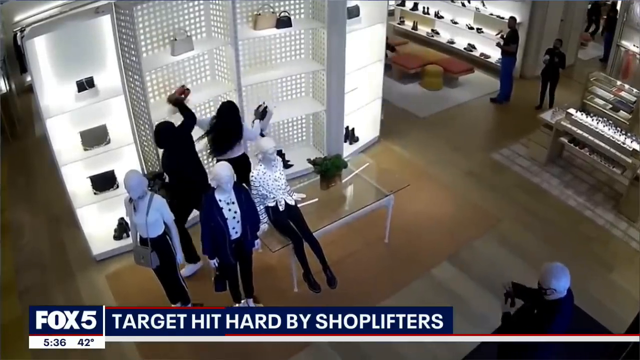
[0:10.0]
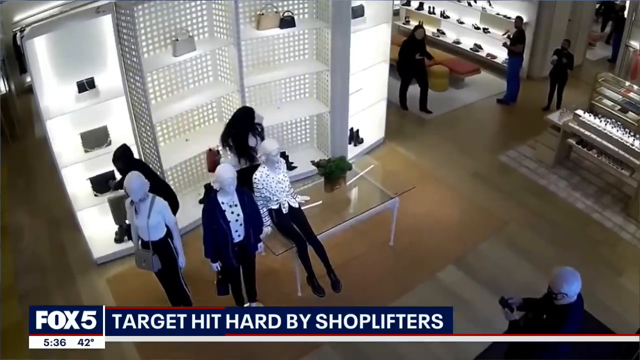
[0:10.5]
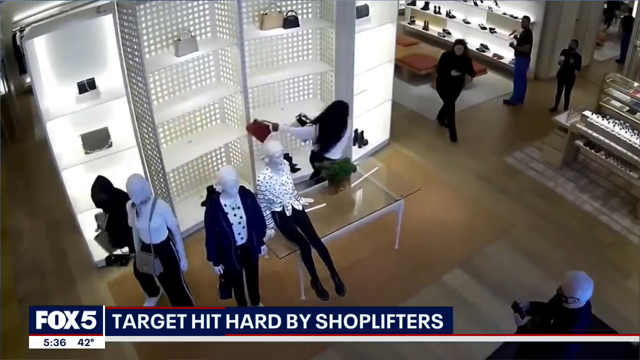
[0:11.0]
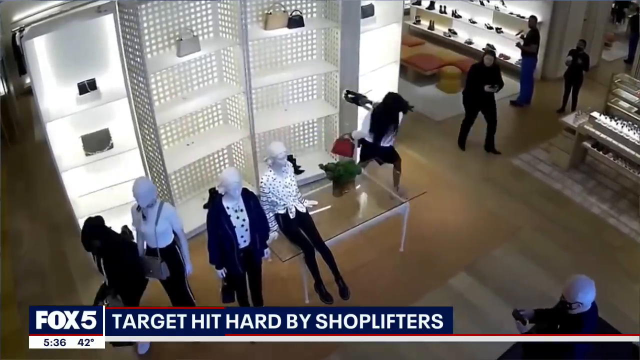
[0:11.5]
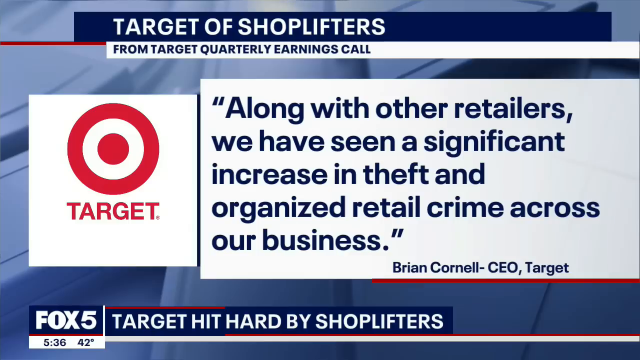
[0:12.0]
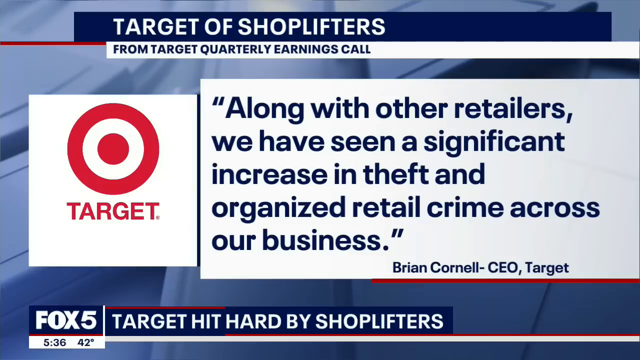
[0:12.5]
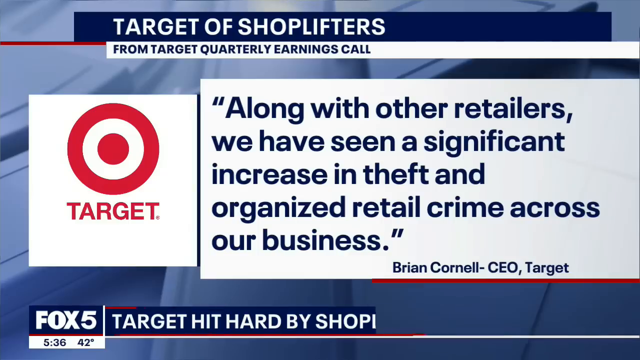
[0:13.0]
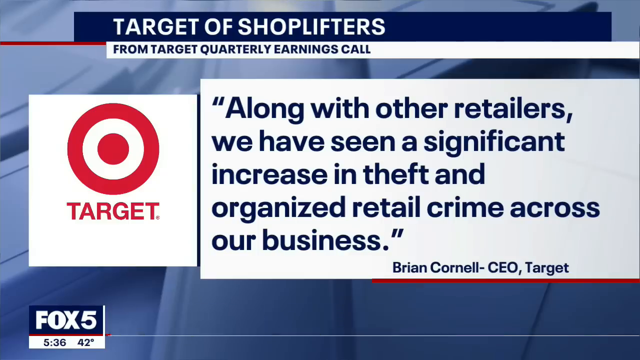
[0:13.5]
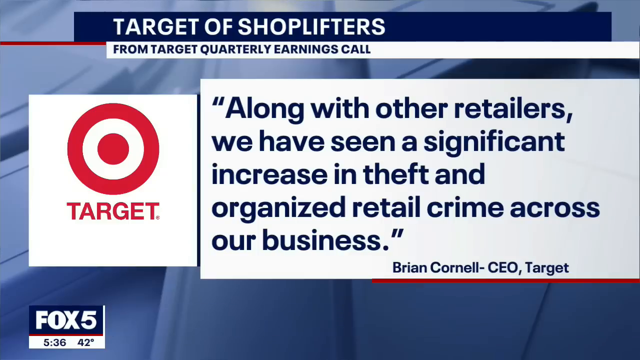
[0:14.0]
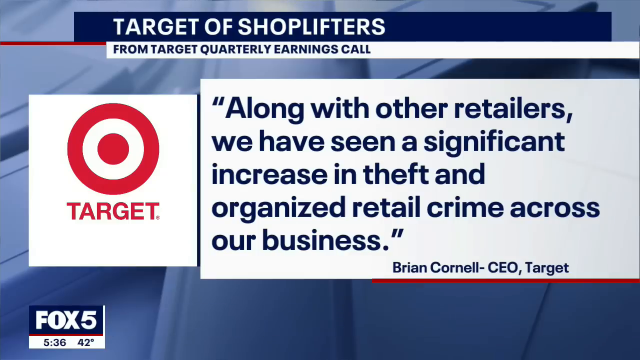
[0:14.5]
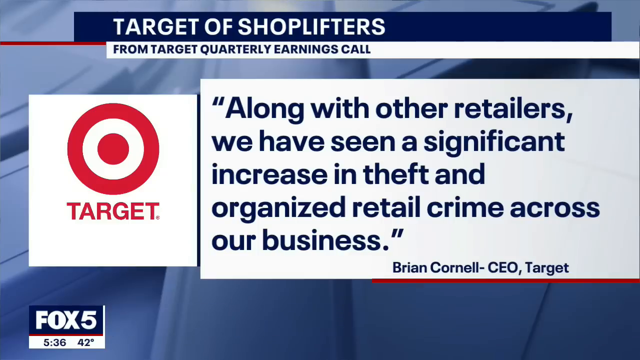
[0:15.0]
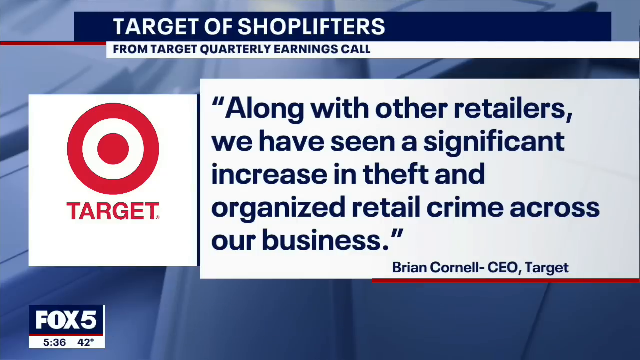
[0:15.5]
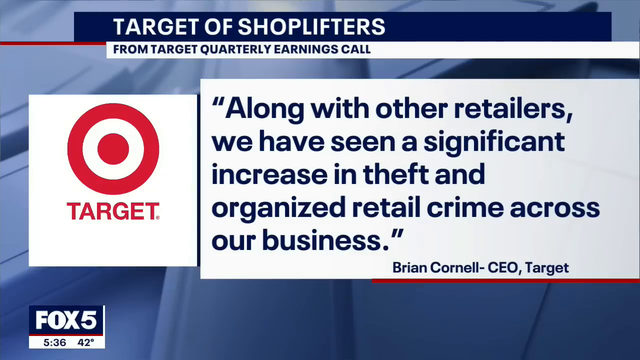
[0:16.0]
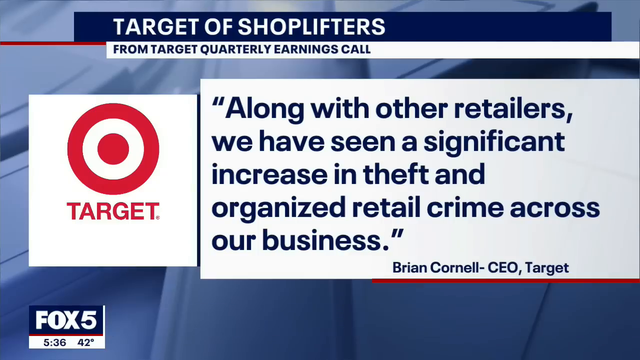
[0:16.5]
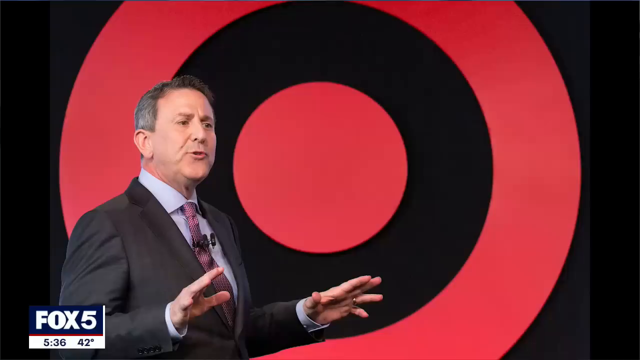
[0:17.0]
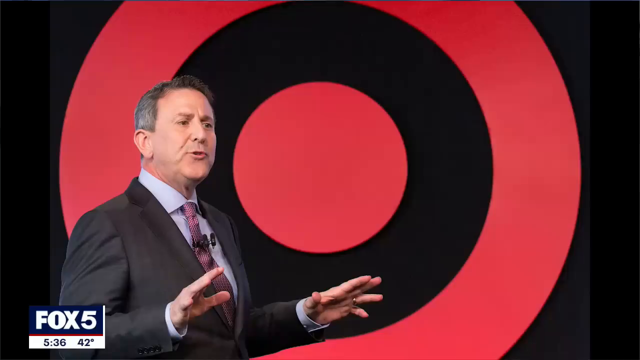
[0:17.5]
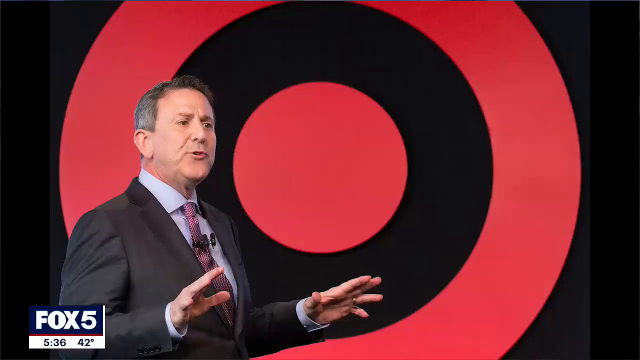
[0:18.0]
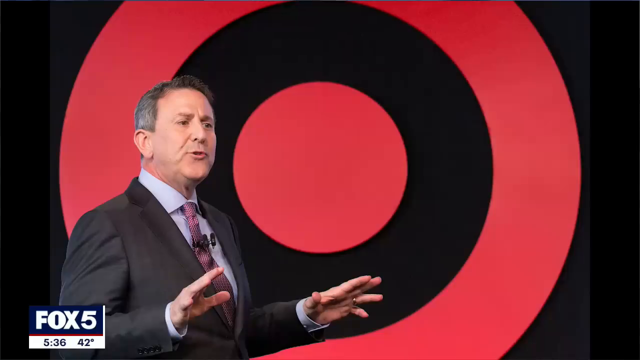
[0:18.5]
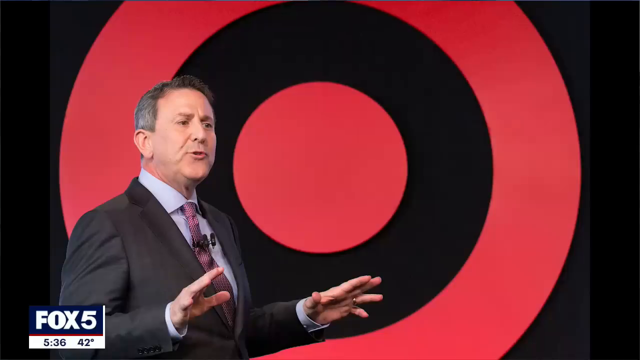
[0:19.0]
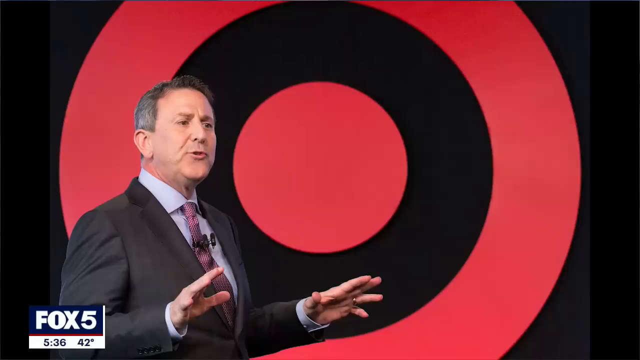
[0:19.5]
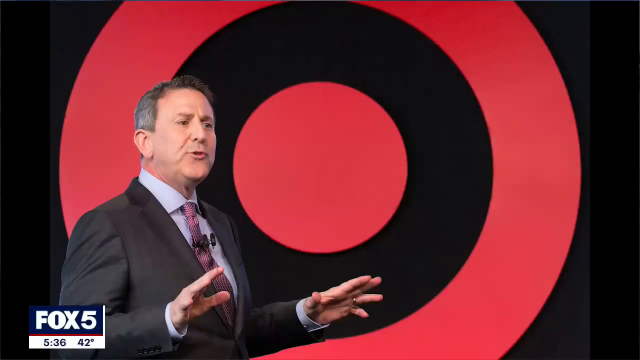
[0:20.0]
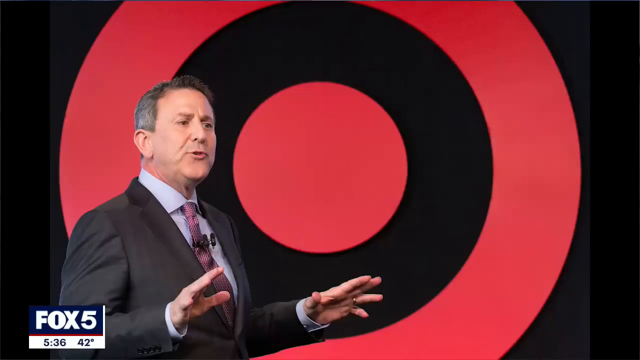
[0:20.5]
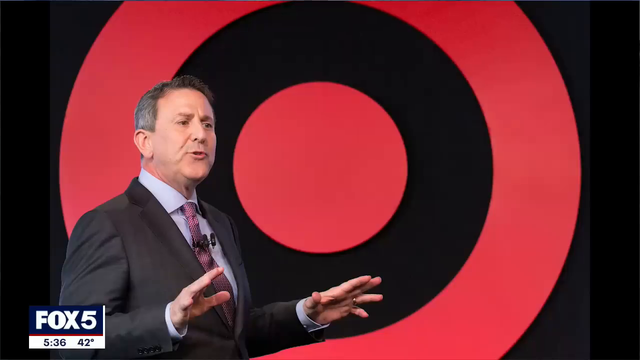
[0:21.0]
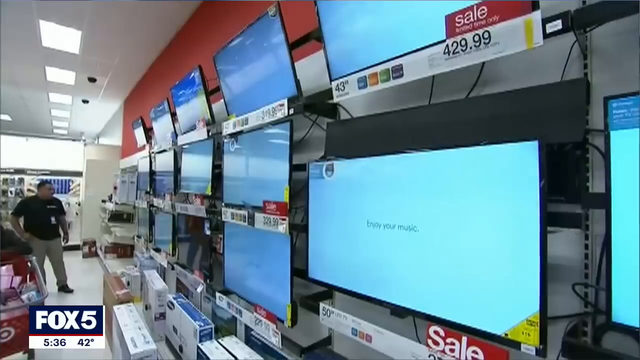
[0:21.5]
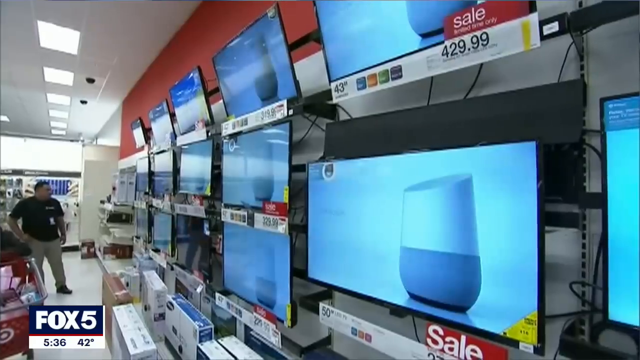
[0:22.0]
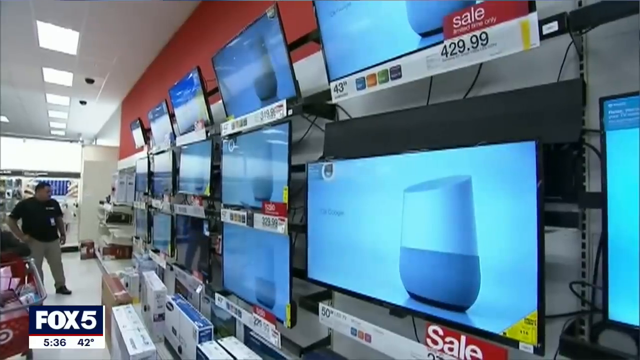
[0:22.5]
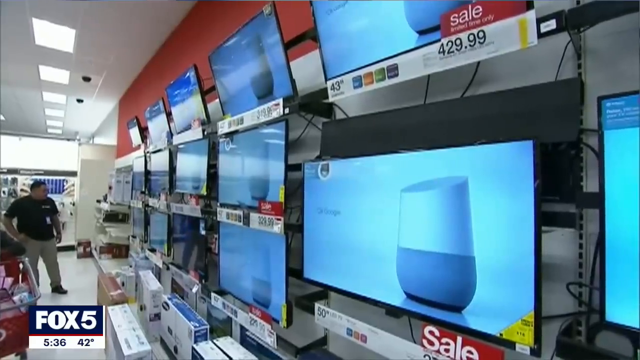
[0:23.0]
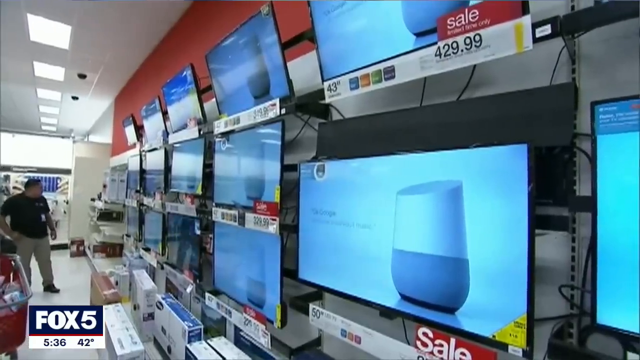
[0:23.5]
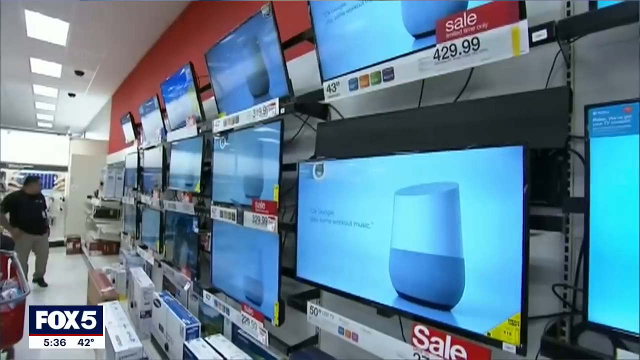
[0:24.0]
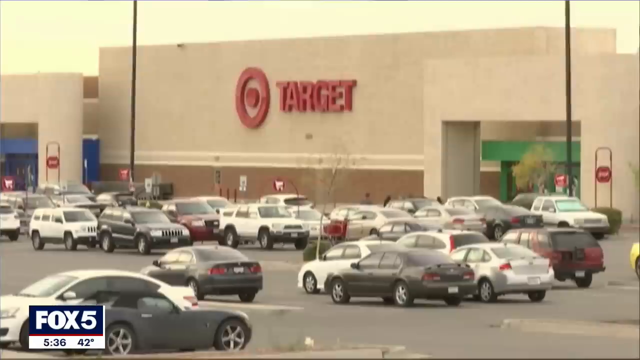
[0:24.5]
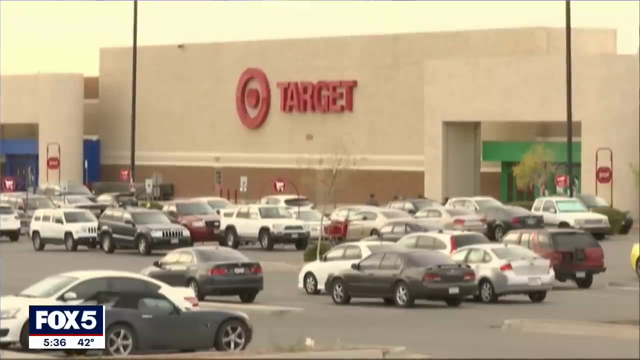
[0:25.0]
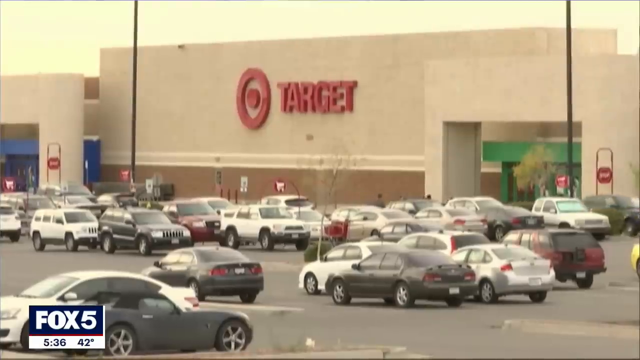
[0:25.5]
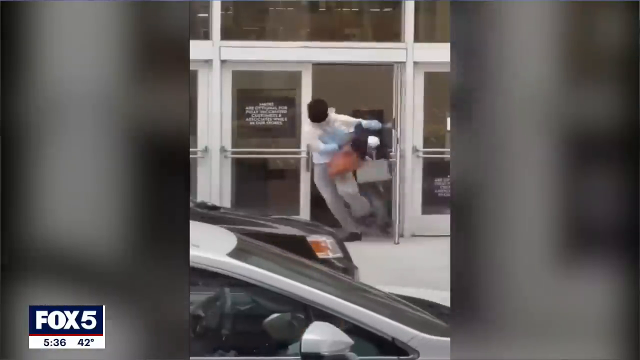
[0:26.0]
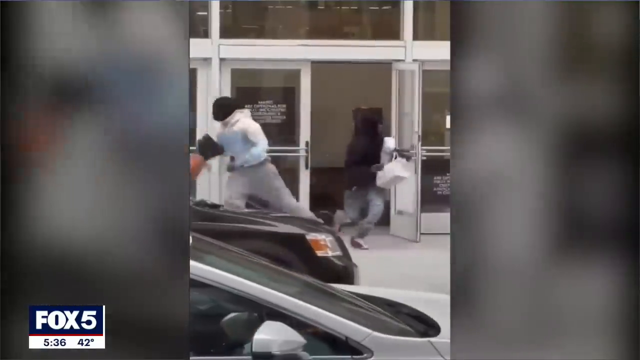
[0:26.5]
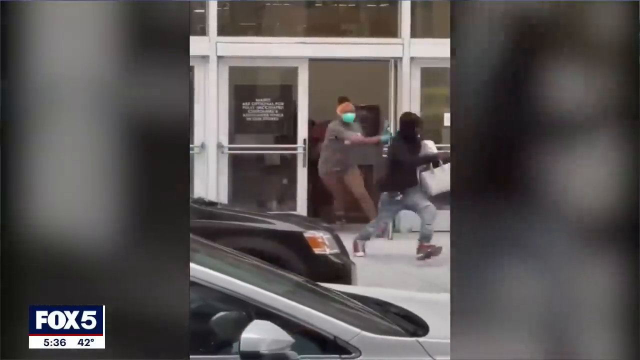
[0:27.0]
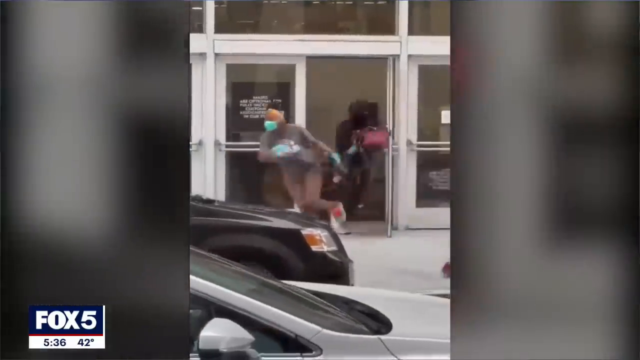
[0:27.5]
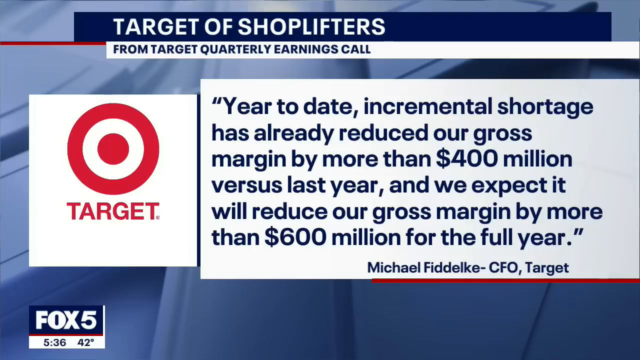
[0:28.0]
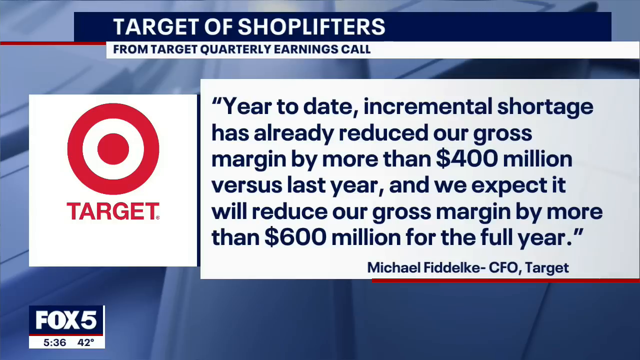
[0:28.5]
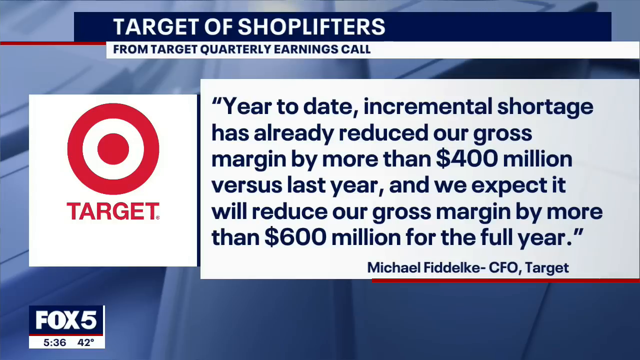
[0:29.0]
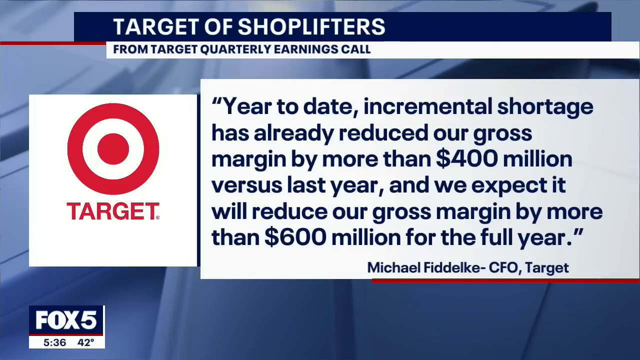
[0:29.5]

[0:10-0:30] A plain blank screen appears. At the top, in white letters on a navy rectangular banner, are the words "Target of shoplifters," and below that it says "From Target quarterly earnings call." The Target logo in red is on the left side of the screen, and to the right is a quote from Brian Cornell, the CEO of Target: "Along with other retailers, we have seen a significant increase in theft and organized retail crime across our business." At the bottom of the screen it says "Target hit hard by shoplifters." The Fox 5 News logo is in the lower left corner, along with the time, 5:36, and a temperature of 42 degrees. After several seconds, a gray-haired man in a dark suit, blue shirt and red tie appears in a still frame shot with his hands extended out; he appears to be speaking. Behind him is a large black and red bullseye serving as the background. Next, the TV and electronics section of Target is shown, where the TVs are displayed, followed by the outside of Target and the parking lot. At the very end, many people run very quickly out of the store.